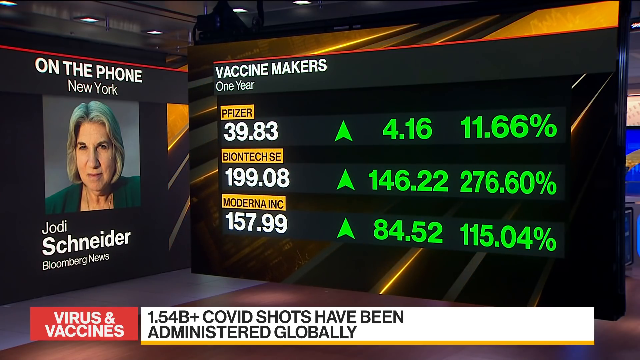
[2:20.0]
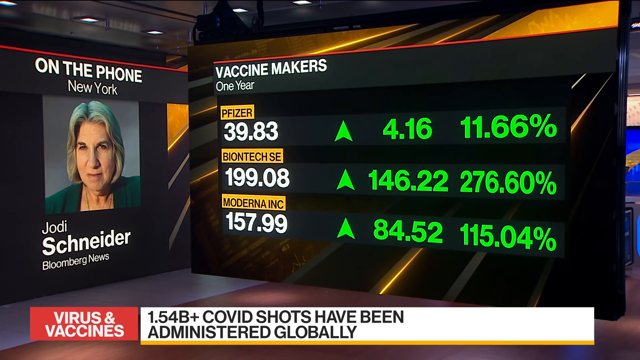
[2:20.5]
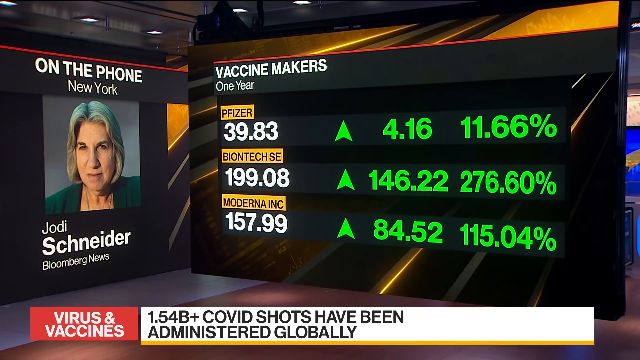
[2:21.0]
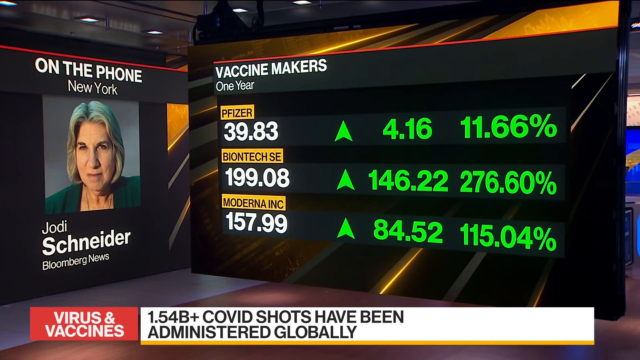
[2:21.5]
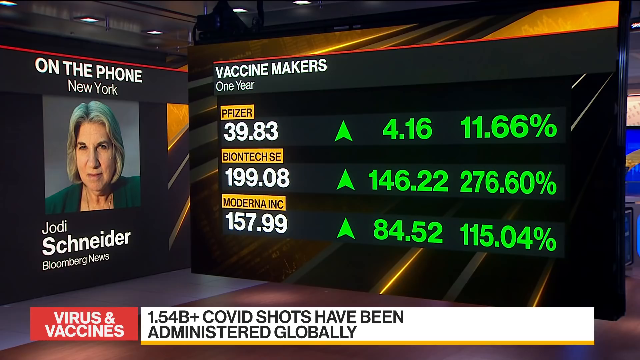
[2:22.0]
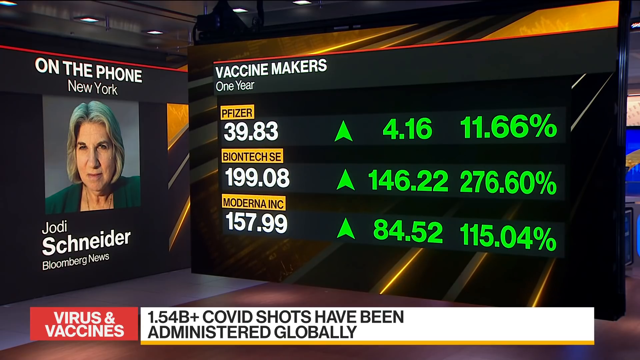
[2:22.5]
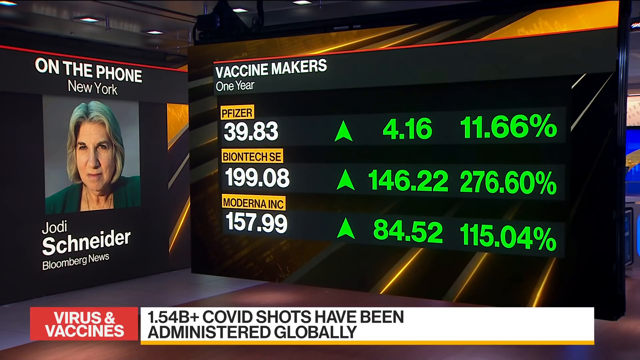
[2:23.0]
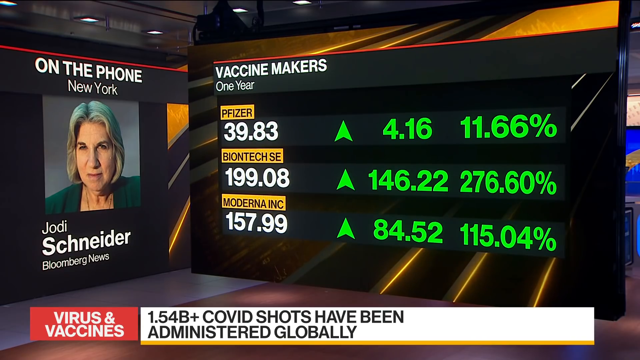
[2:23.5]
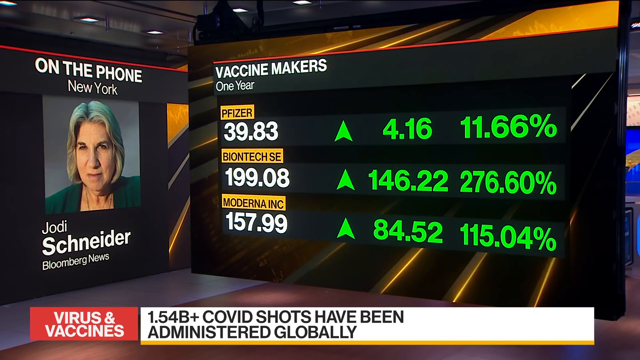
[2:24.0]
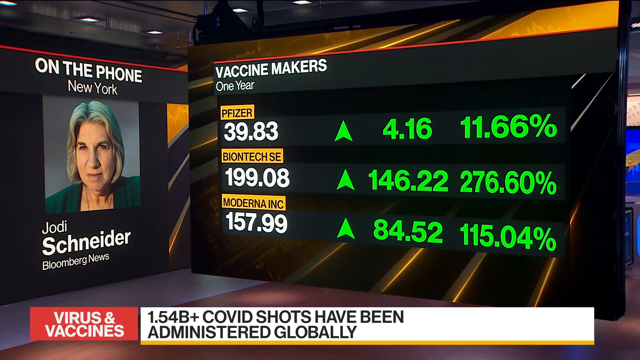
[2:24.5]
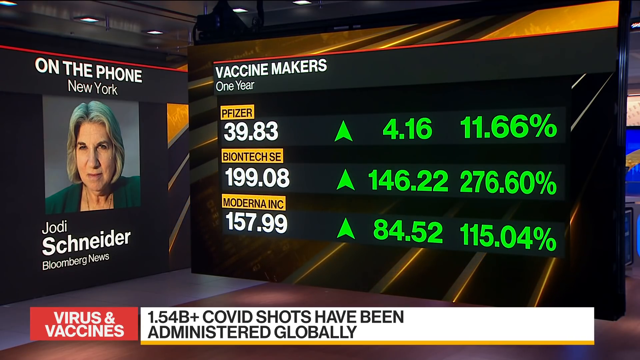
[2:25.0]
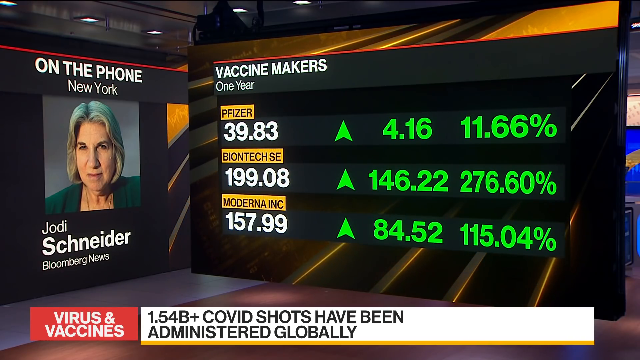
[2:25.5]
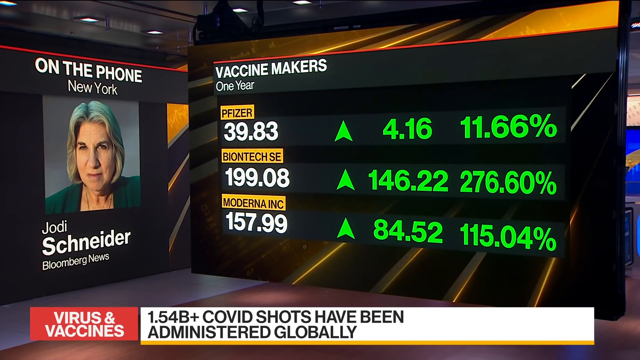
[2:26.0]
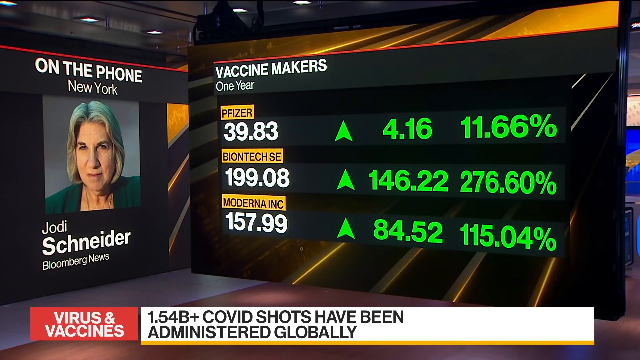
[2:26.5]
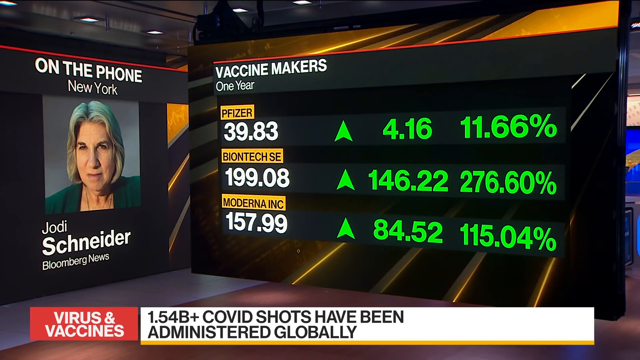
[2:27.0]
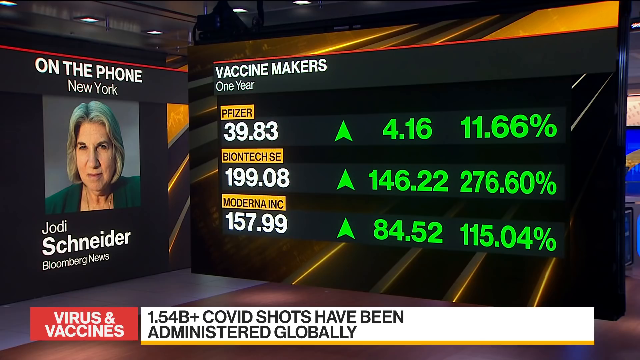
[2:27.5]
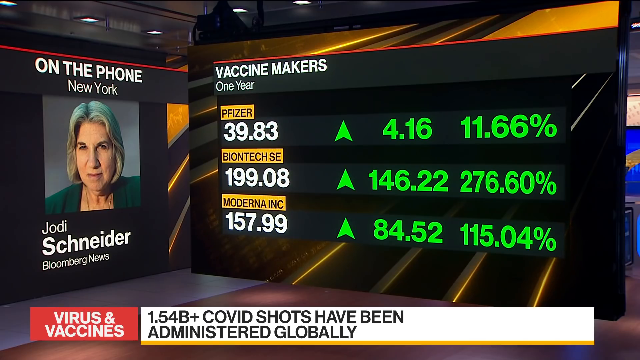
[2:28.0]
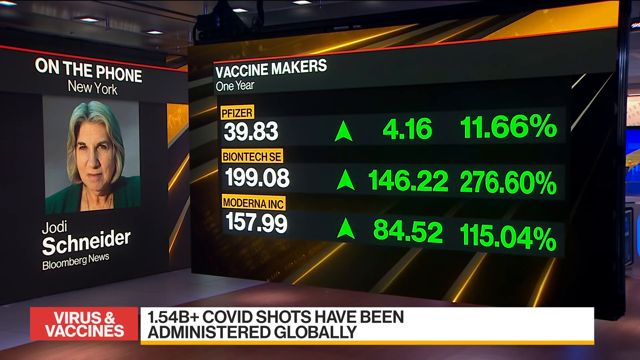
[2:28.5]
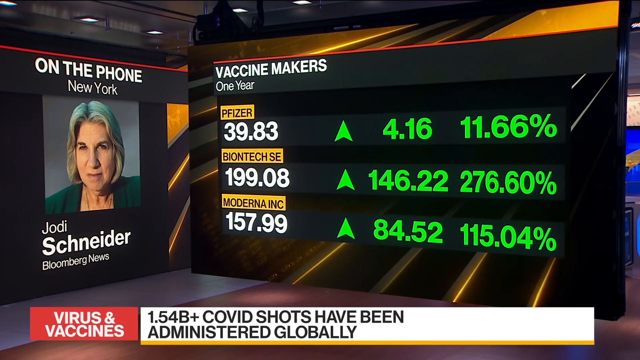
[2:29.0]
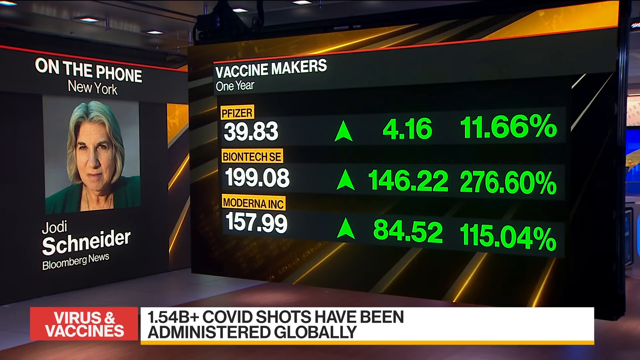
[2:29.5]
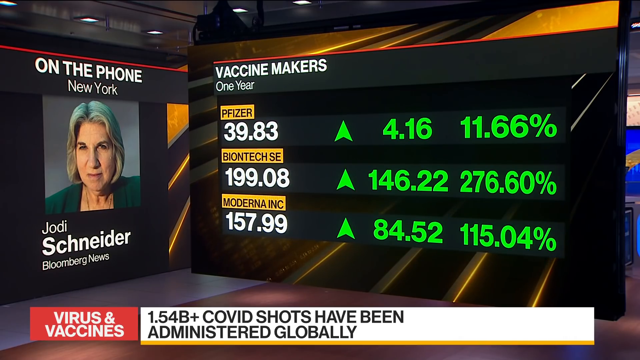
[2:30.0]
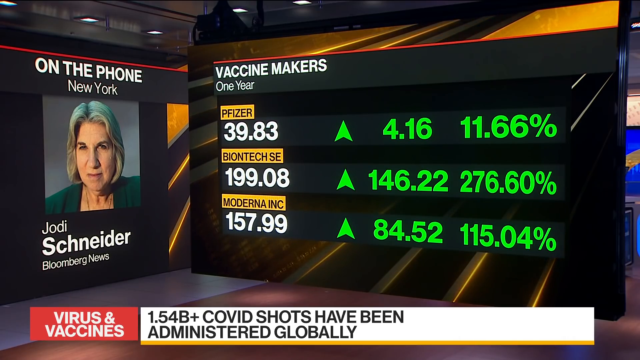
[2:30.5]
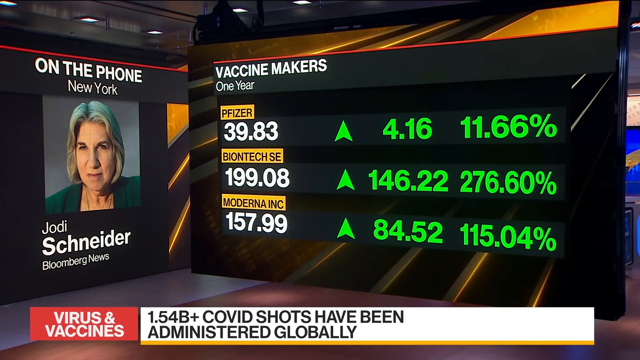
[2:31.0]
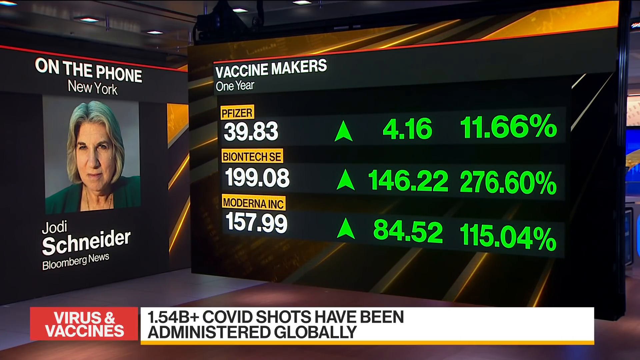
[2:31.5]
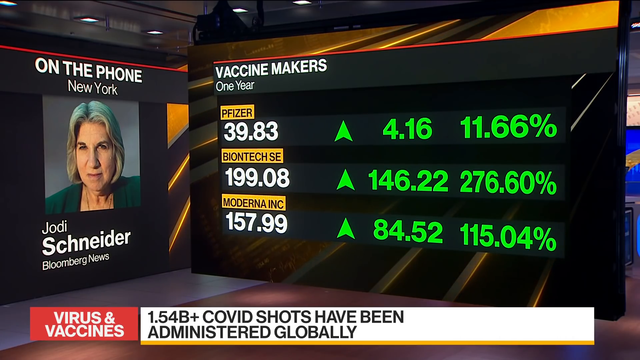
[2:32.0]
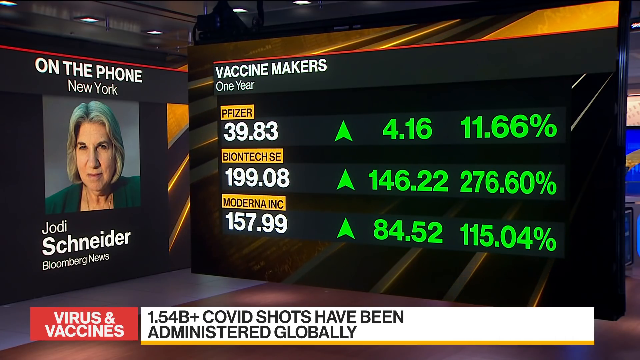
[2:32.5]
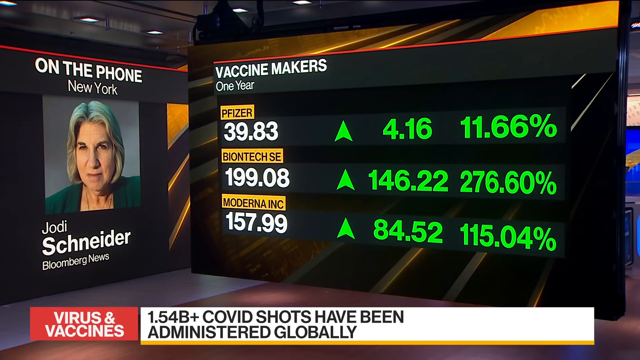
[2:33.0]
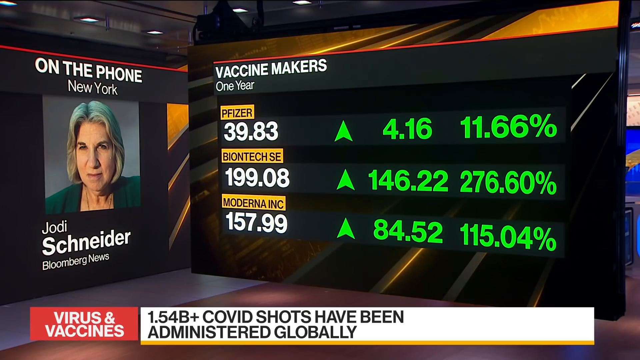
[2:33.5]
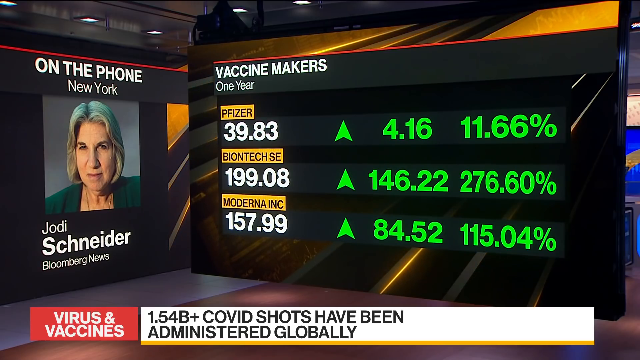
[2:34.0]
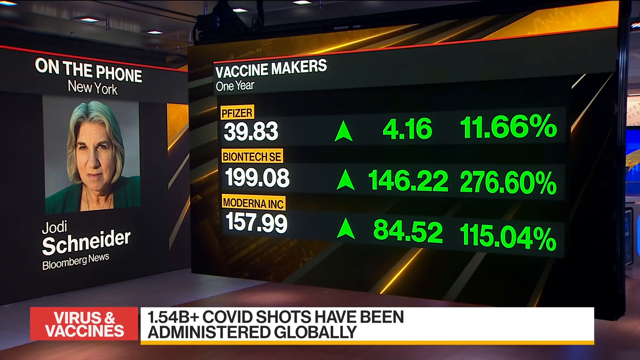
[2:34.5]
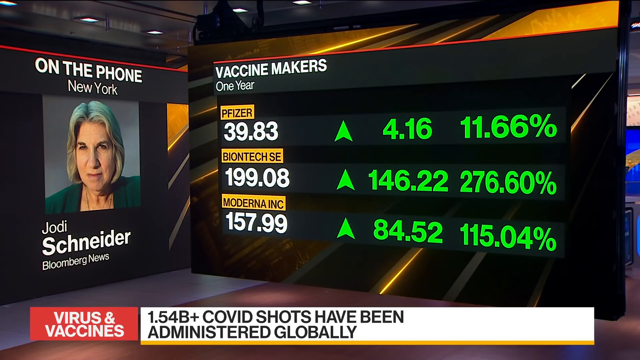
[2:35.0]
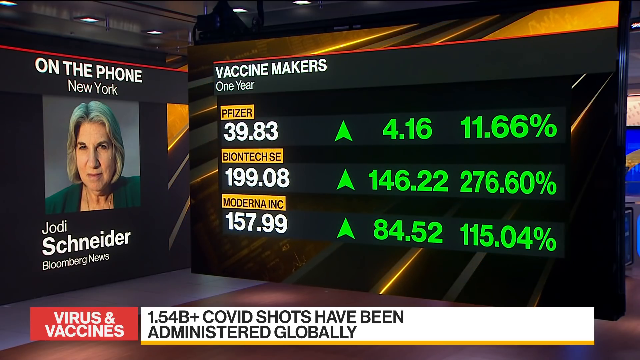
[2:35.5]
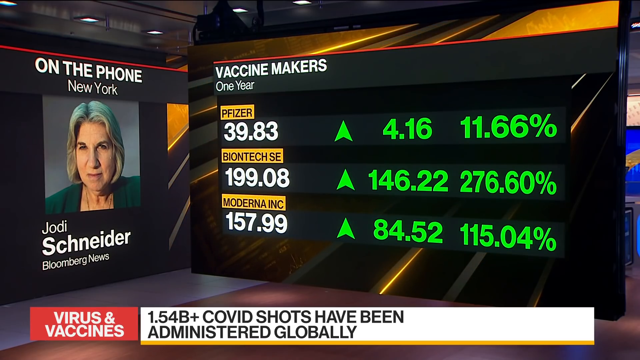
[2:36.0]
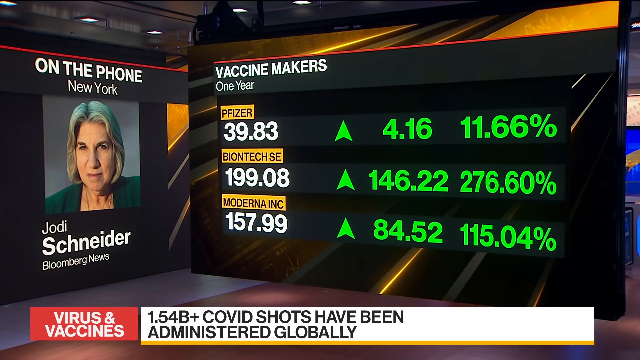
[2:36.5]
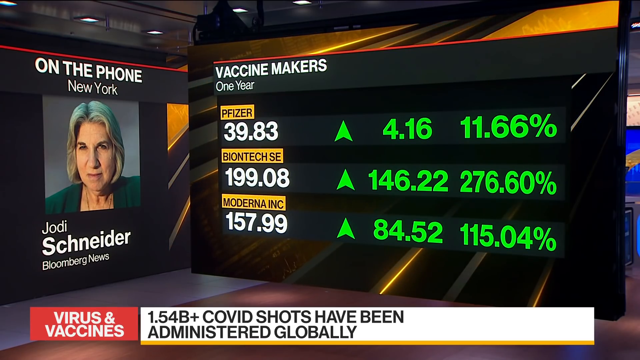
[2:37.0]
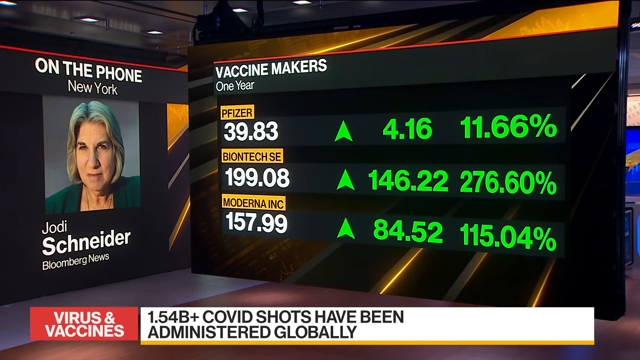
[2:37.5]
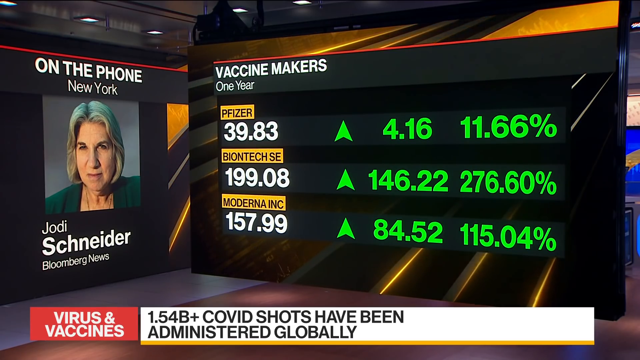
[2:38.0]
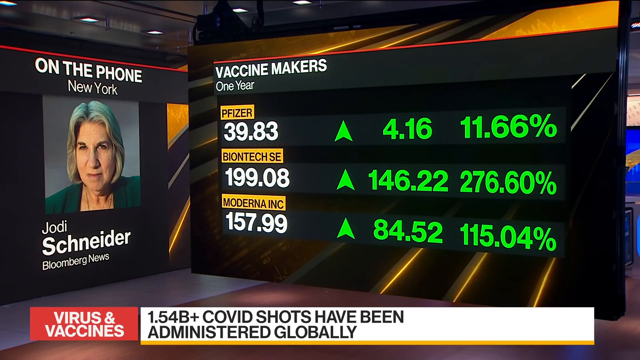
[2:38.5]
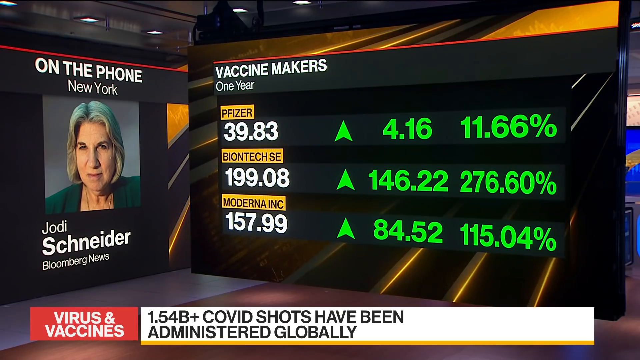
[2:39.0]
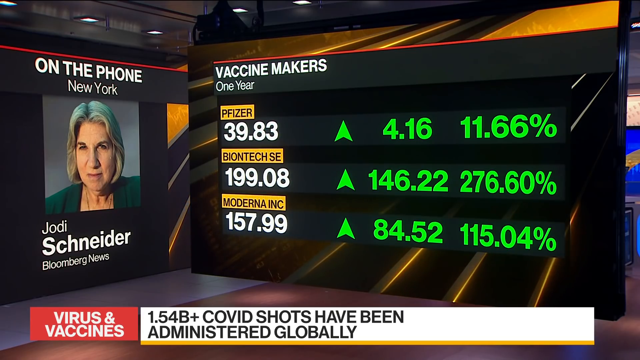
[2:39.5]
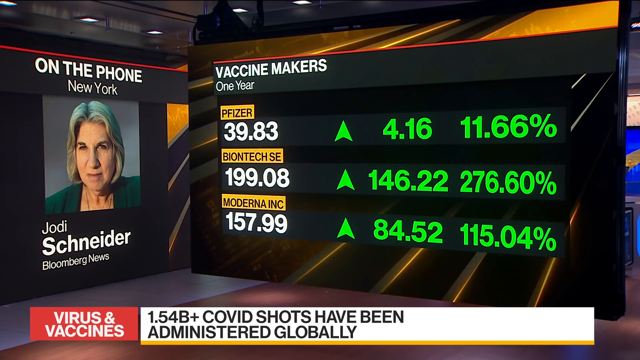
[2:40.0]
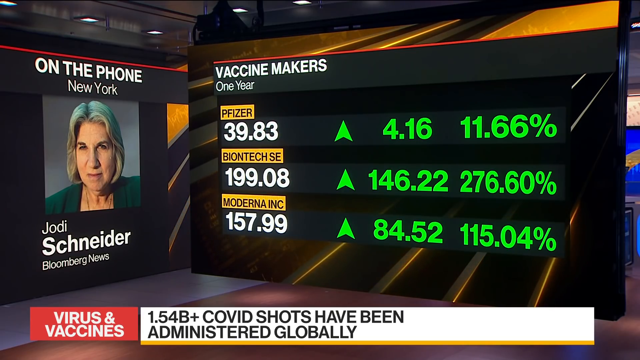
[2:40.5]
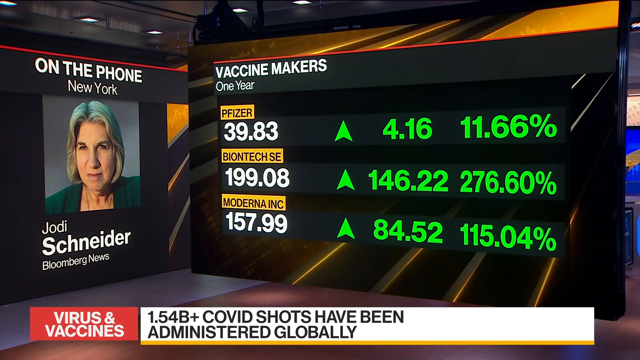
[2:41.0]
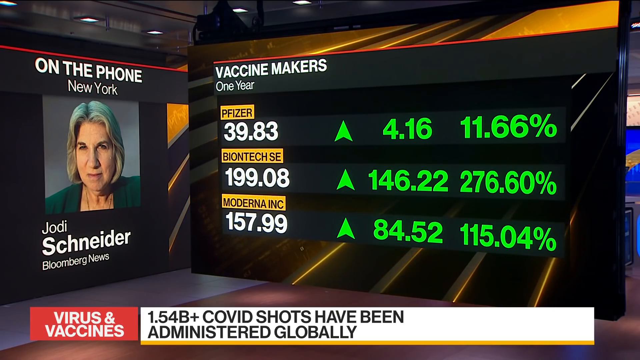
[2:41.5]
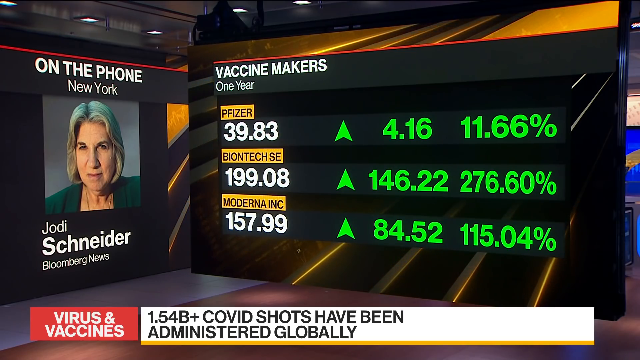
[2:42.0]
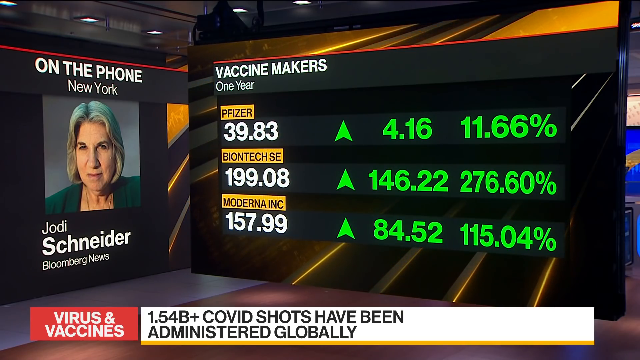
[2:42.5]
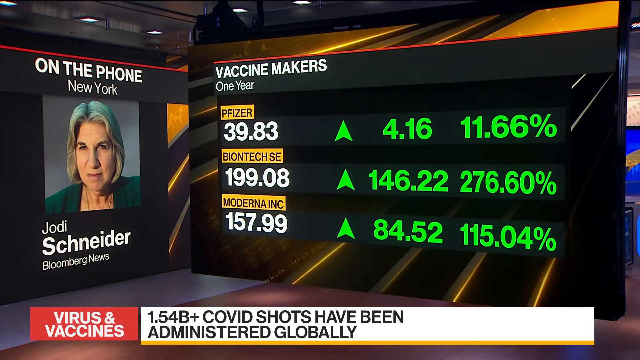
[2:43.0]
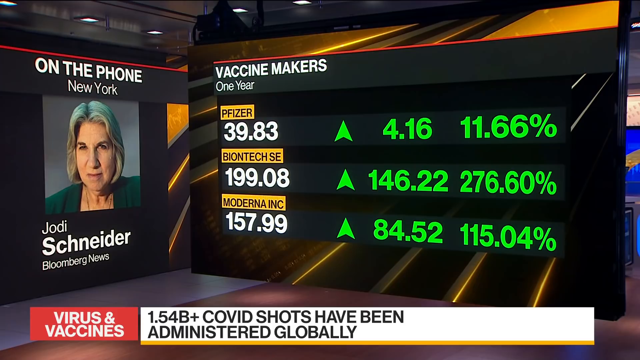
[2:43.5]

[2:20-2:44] The Pfizer, BioNTech SE and Moderna Inc. numbers remain on screen, and the broadcast apparently still features Joey, whose last name seems to be Snodder, of Bloomberg News in New York, inside the newsroom. The time of day is unclear: there are many lights but no visible windows. The numbers are green on a black background, with green arrows possibly showing a stock going up, or possibly an increase in vaccinations over the year.